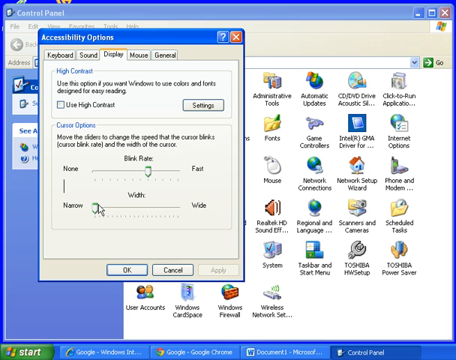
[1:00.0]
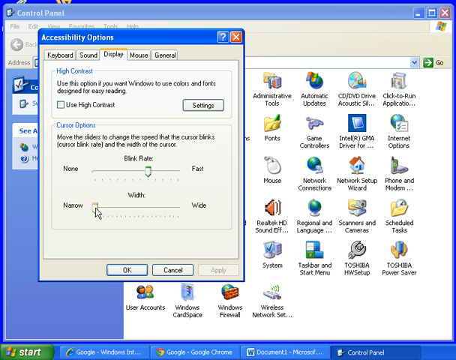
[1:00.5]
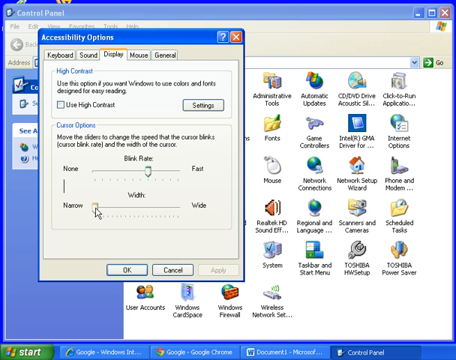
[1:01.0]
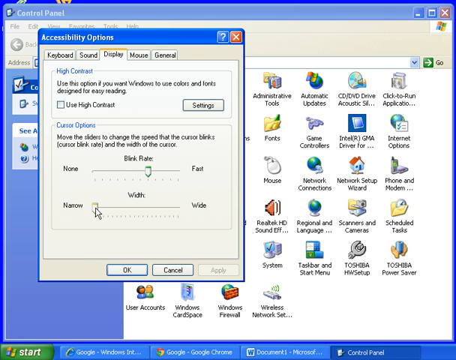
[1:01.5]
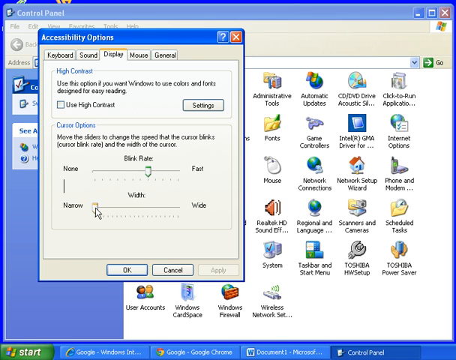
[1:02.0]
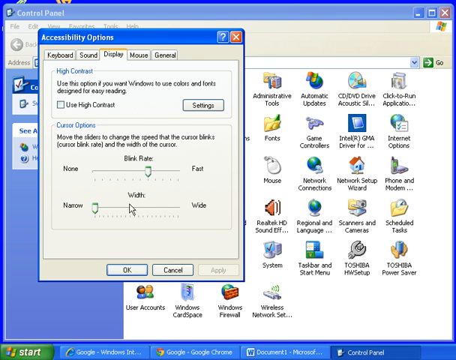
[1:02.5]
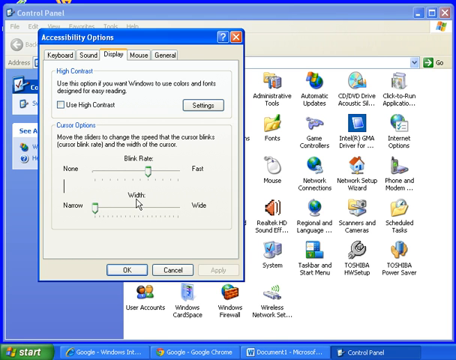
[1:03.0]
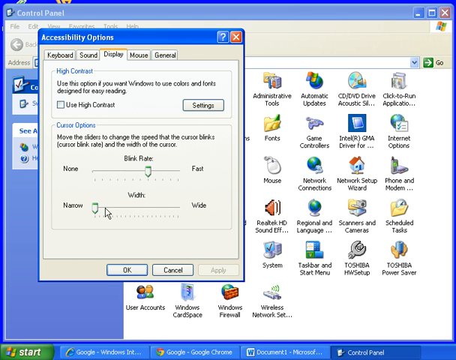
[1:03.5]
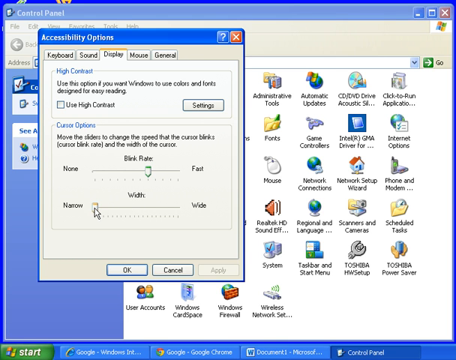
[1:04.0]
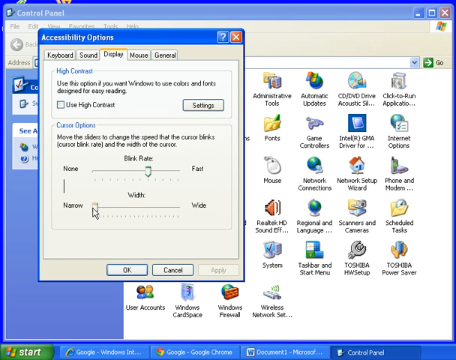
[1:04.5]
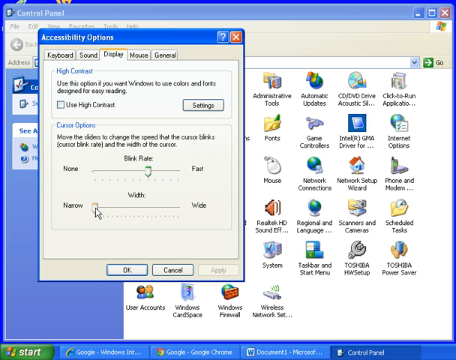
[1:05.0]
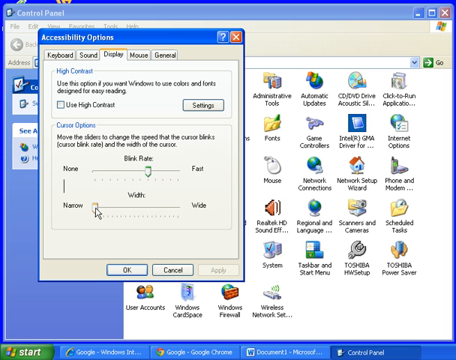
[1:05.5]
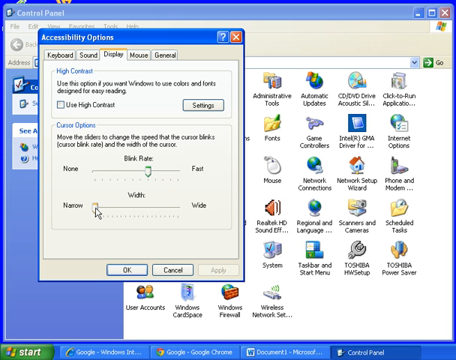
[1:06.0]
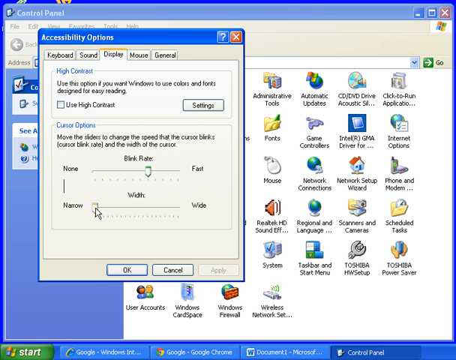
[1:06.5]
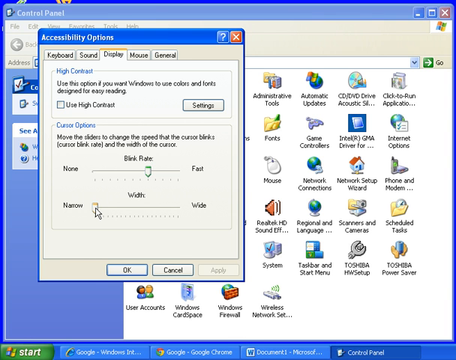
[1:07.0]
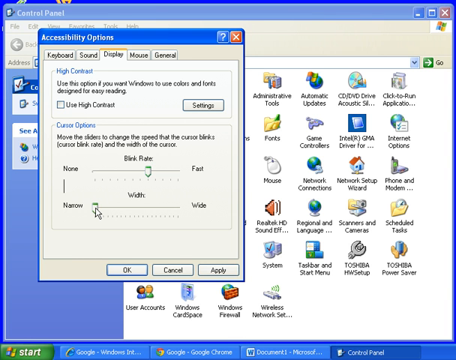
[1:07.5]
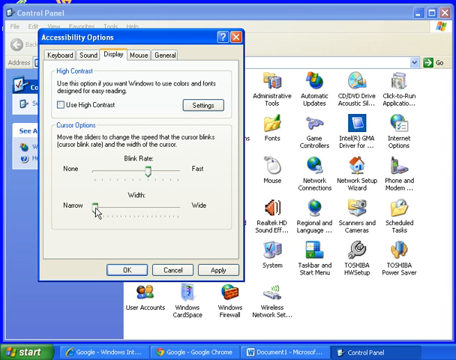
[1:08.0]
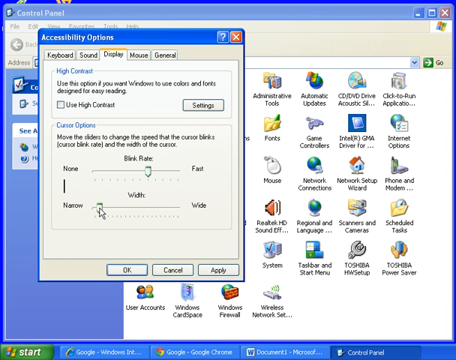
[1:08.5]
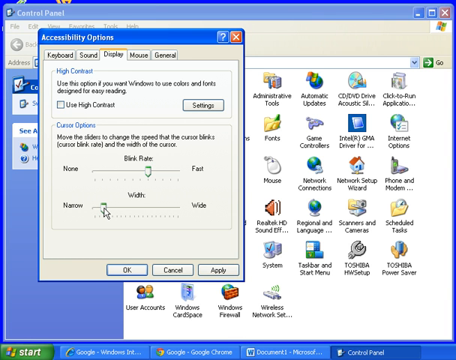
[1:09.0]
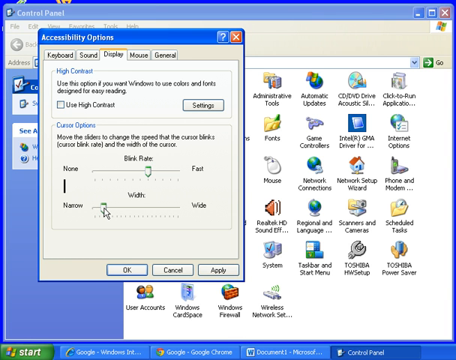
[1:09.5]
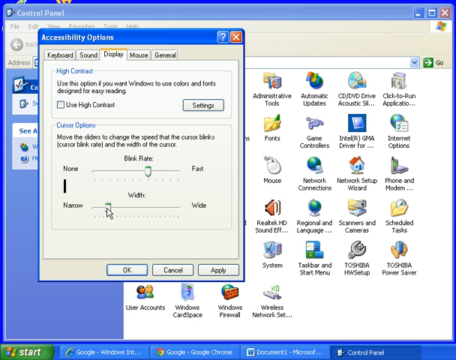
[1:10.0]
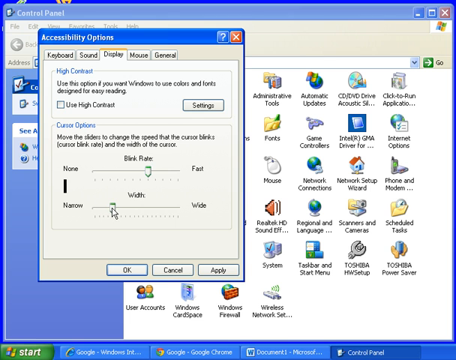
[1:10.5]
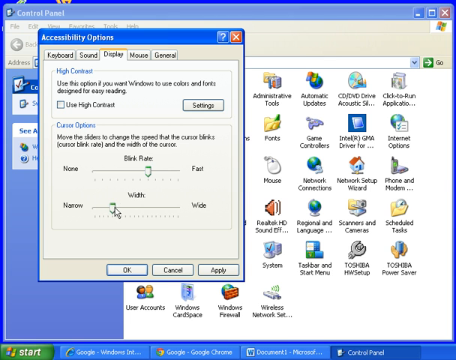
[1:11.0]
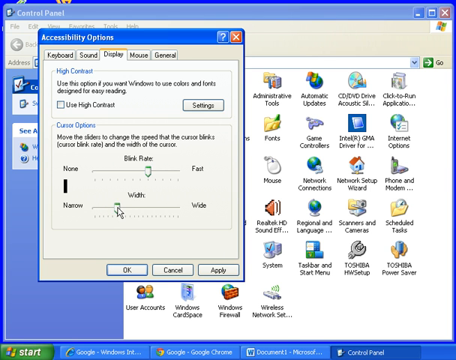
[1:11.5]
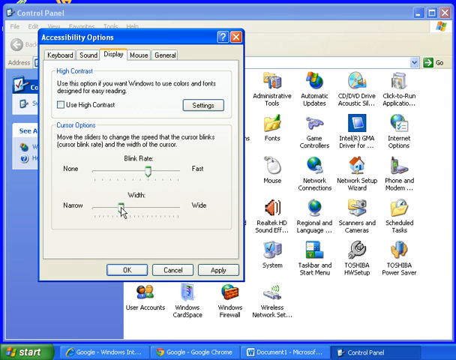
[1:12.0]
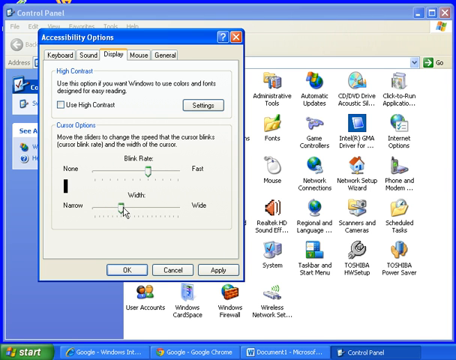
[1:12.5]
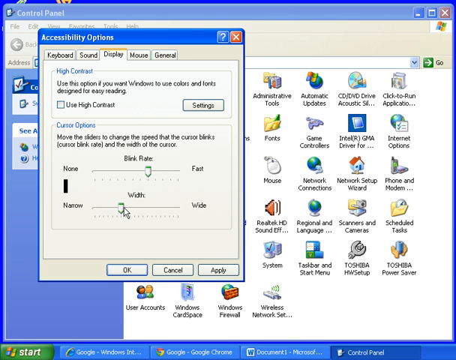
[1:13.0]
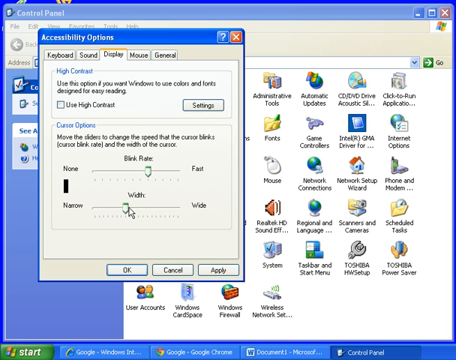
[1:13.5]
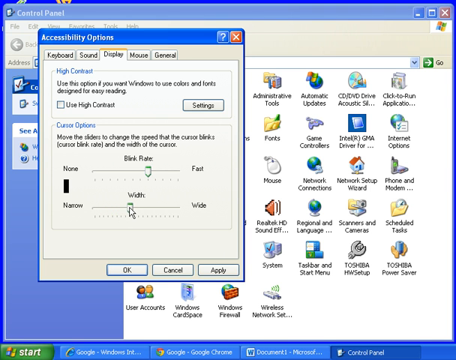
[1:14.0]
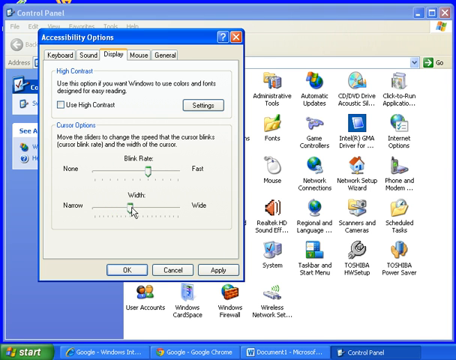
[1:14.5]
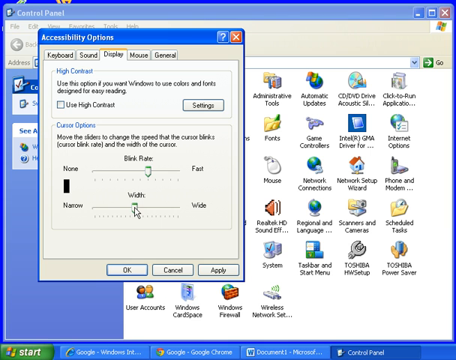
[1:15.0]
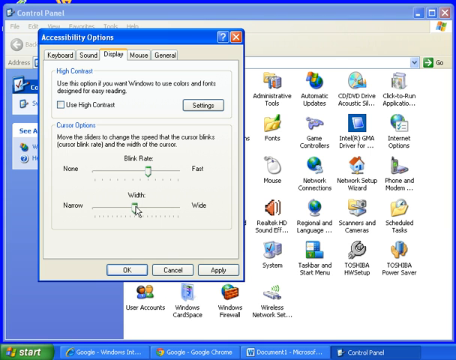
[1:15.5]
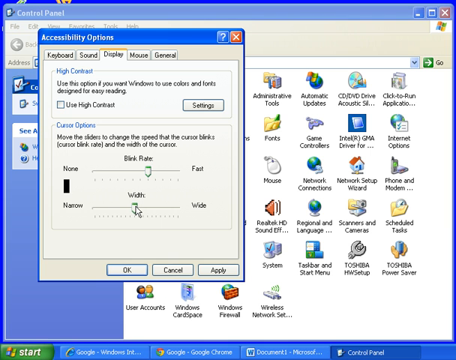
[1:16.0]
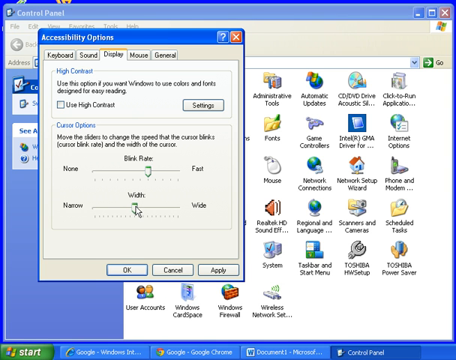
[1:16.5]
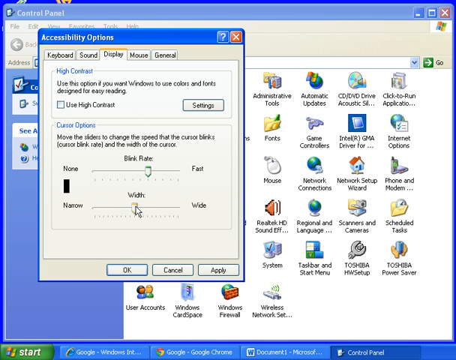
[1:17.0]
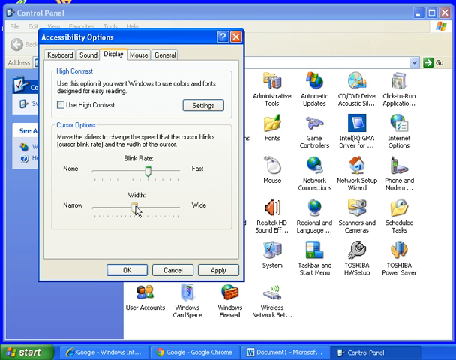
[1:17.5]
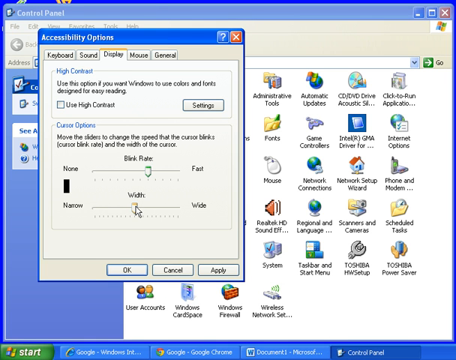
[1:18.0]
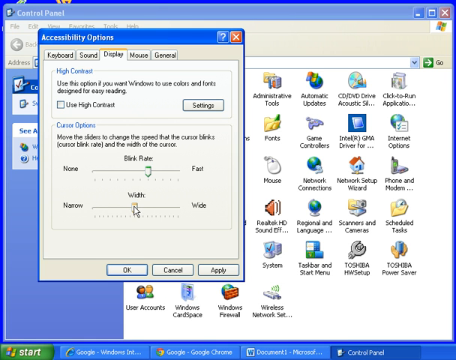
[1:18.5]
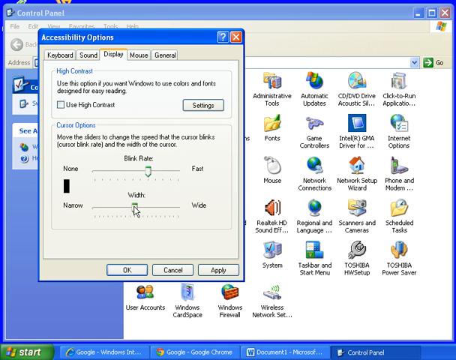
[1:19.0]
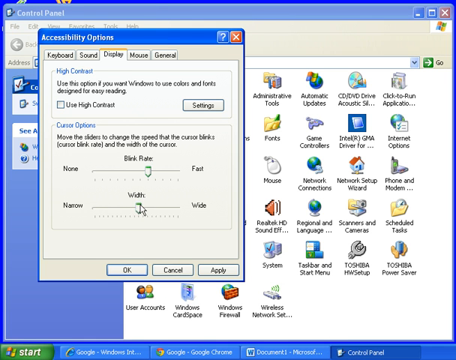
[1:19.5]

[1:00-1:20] The display tab shows "use this option if you want Windows to use colors and fonts designed for easy reading", and then cursor options: "move the sliders to change the speed that the cursor blinks", with cursor blink rate and the width of the cursor. The slider for width is all the way at the narrow end, and the user moves it to the middle to make the cursor wider.